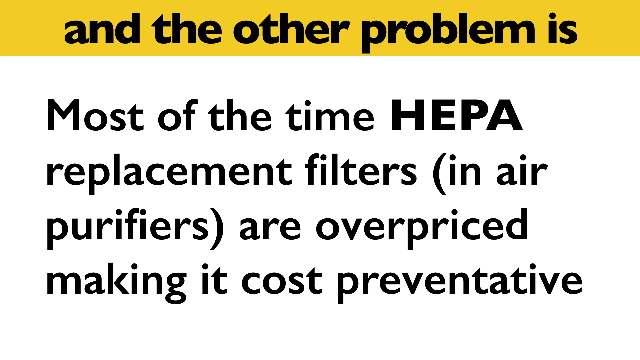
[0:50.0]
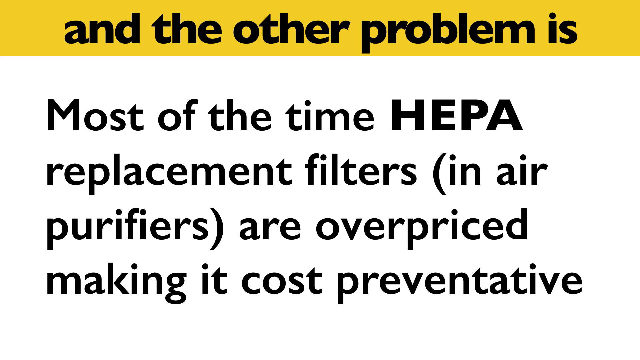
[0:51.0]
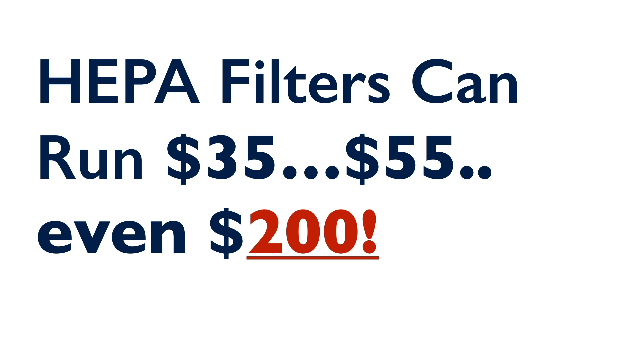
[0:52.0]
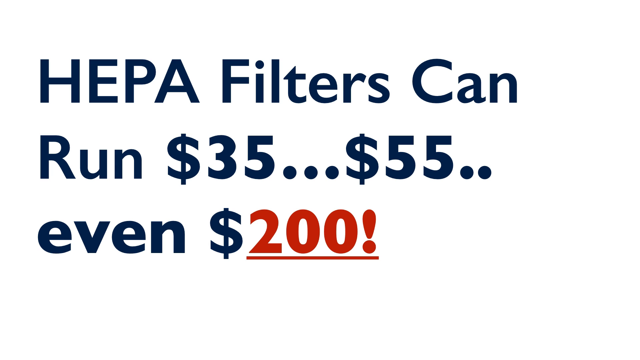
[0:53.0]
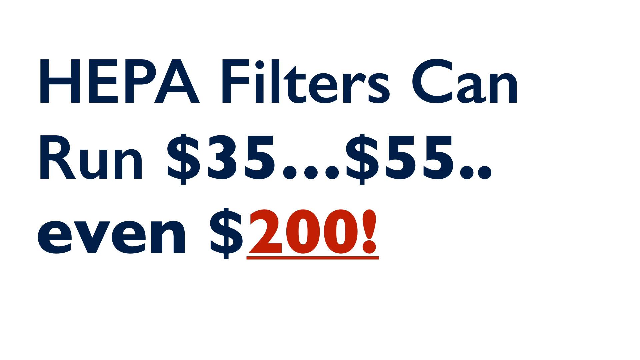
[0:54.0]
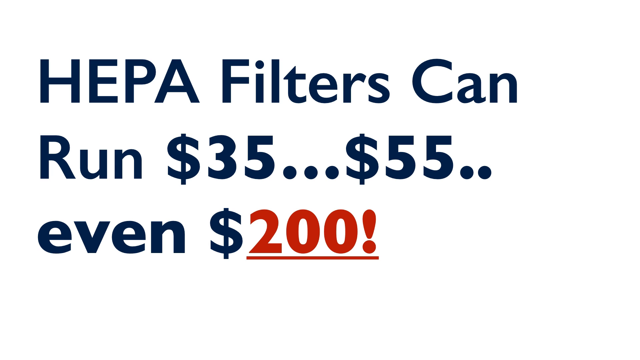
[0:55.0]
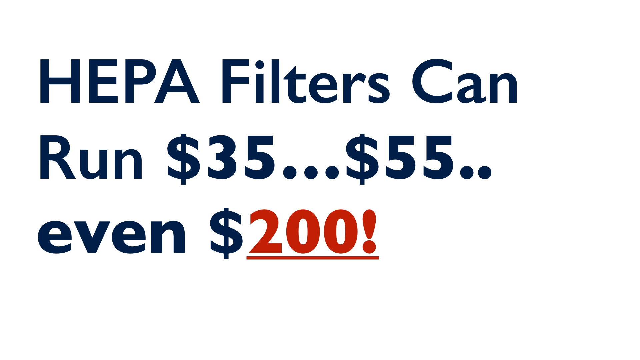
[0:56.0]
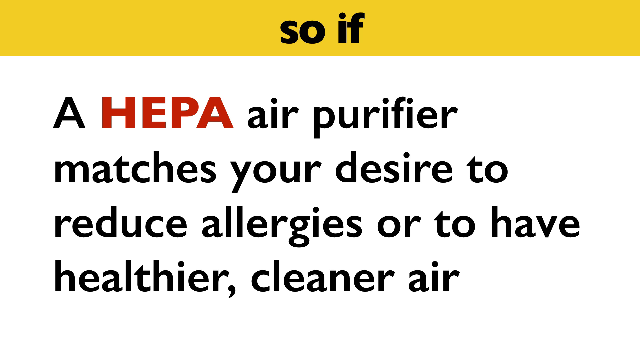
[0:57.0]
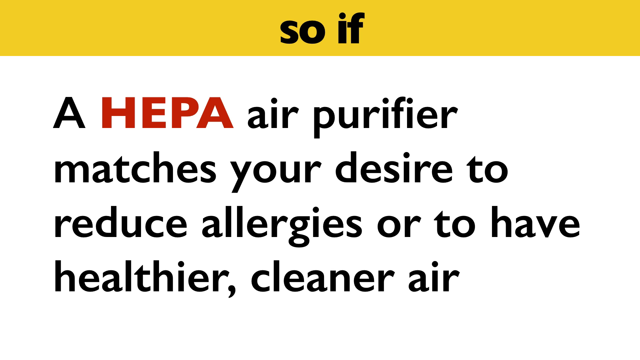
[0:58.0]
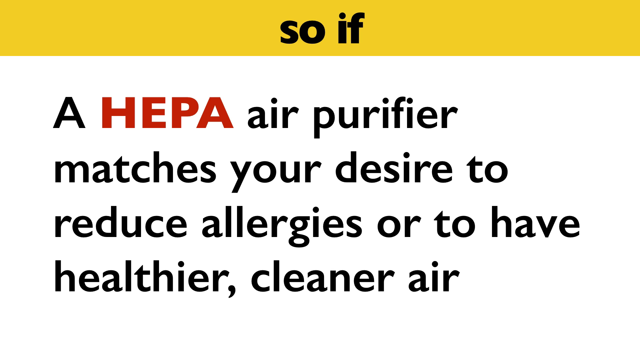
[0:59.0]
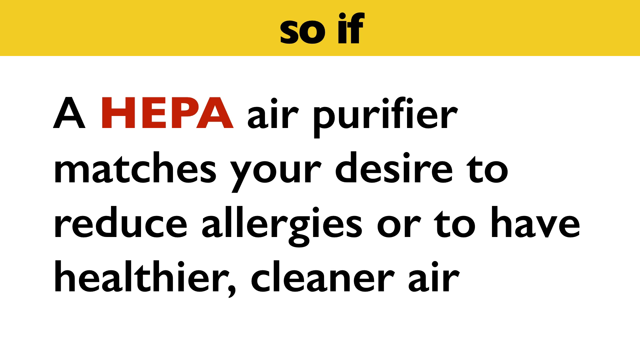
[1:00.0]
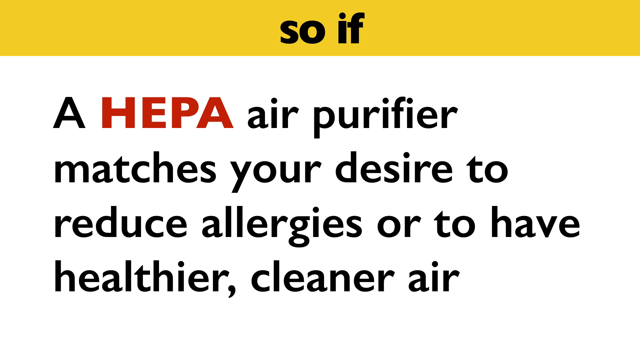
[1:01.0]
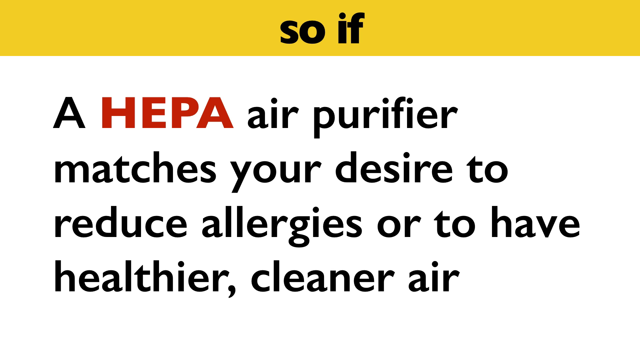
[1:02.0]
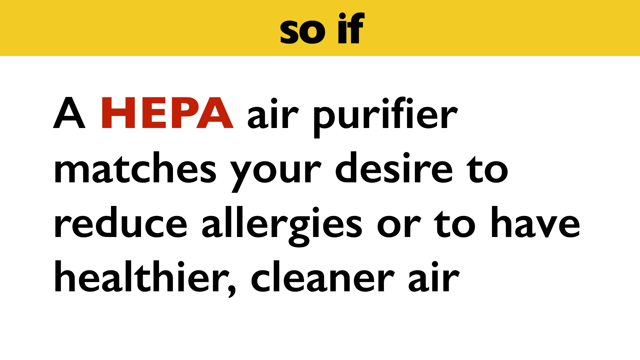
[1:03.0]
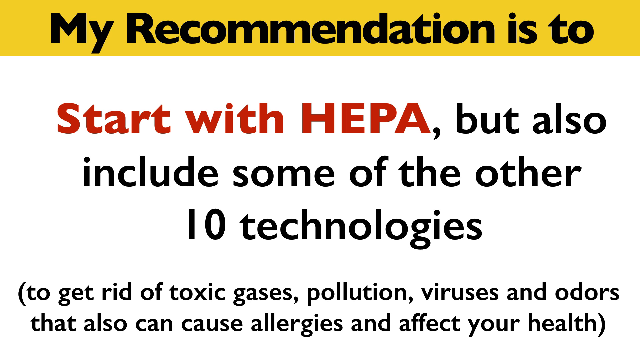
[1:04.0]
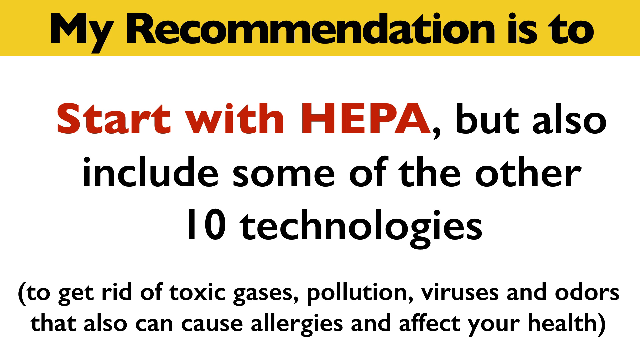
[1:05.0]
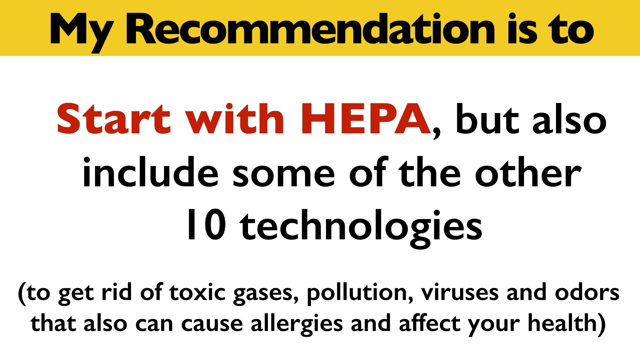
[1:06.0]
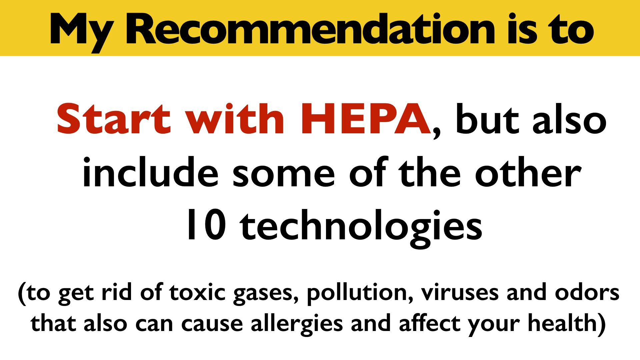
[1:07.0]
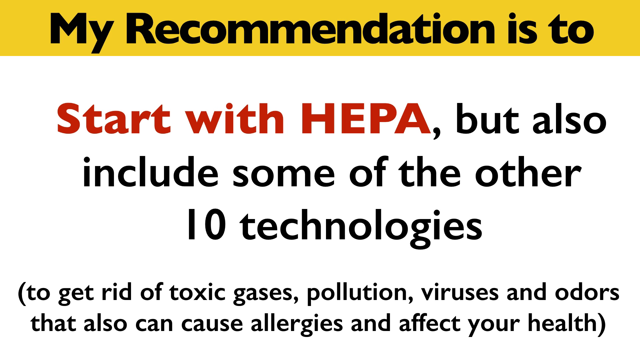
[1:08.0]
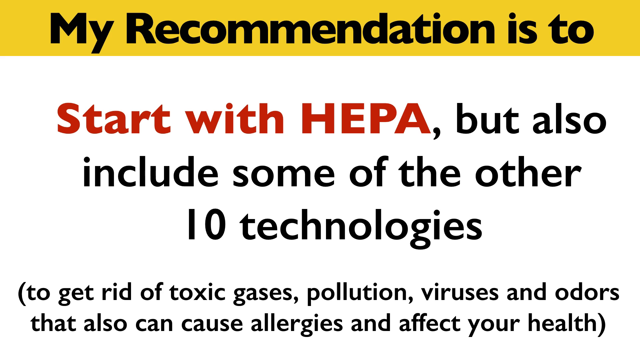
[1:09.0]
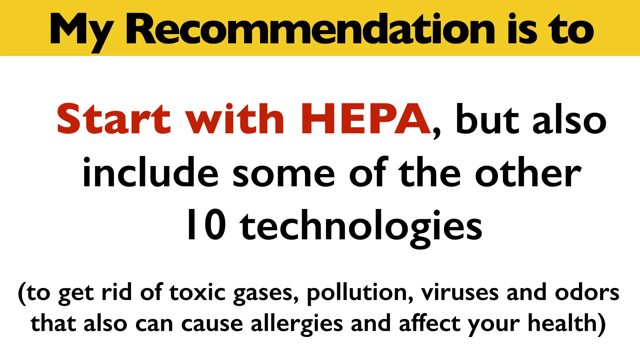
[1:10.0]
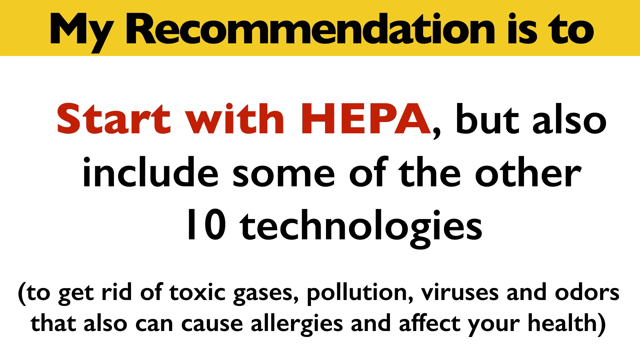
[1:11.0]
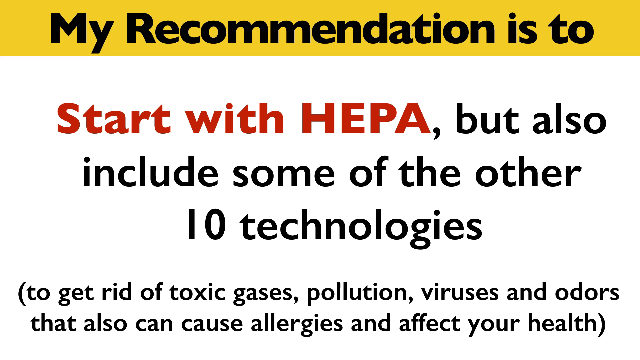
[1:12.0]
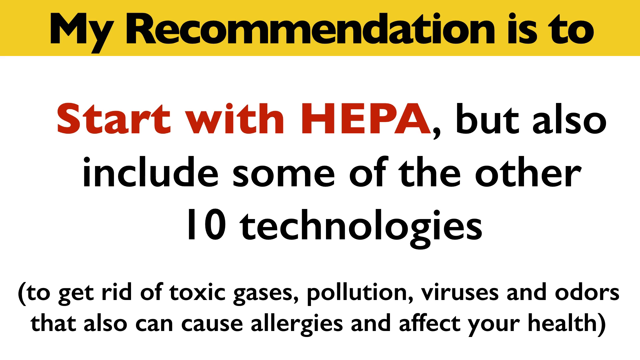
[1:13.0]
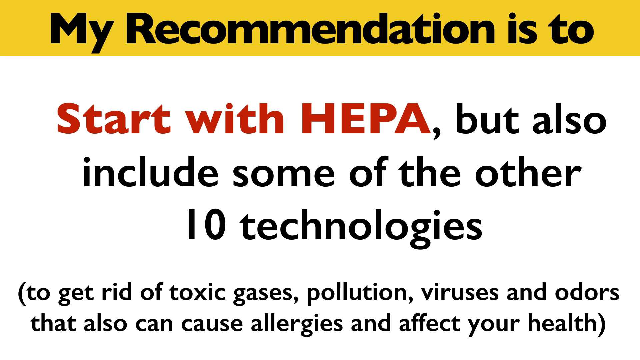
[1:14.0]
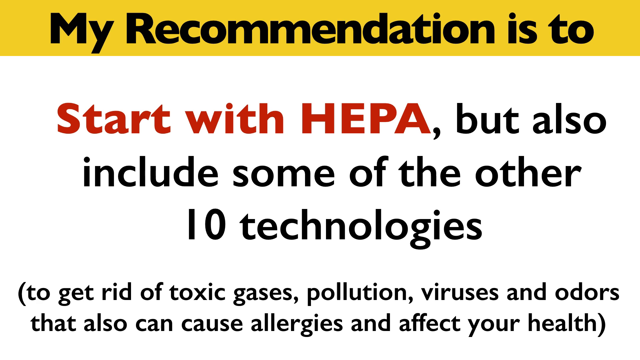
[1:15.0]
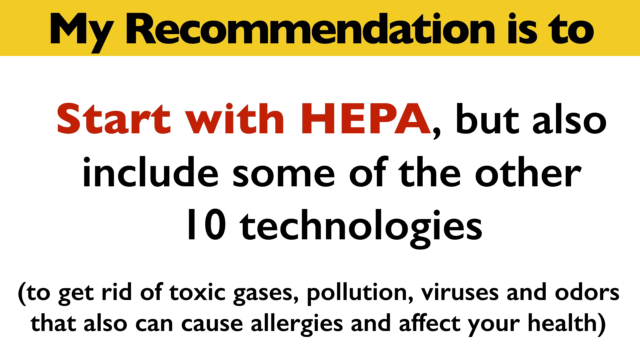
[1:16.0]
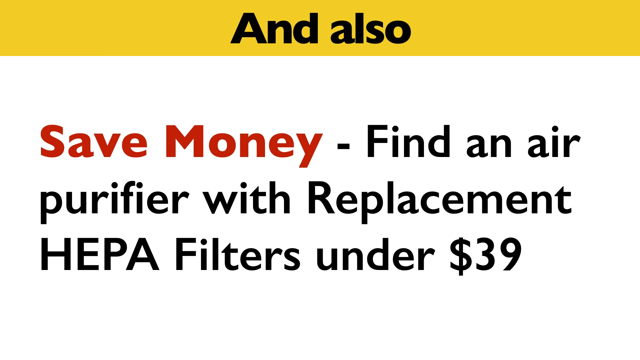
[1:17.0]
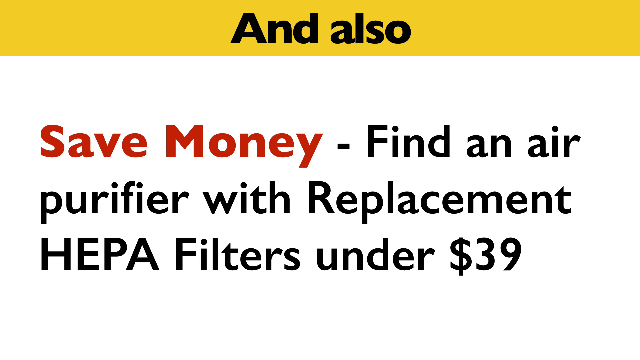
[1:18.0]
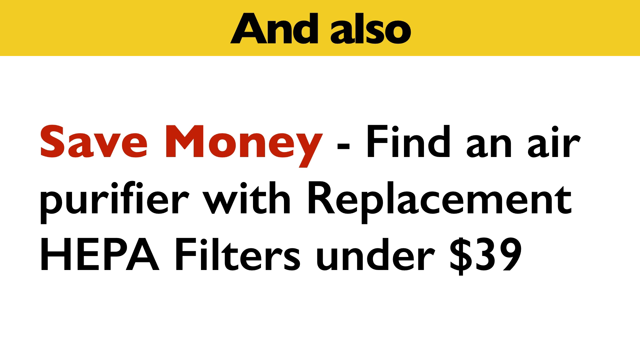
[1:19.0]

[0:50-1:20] The slide has a yellow box across the entire width, taking up about 5% of the top, reading "and the other problem is", with the text "Most of the time HEPA replacement filters in air purifiers are overpriced, making it cost preventative" below it in sentence case and normal text. It stays on screen for a couple of seconds, then the yellow bar disappears and a plain white slide reads "HEPA filters can run" followed in bold by "$35... $55... even $200!", with "$200" underlined in red and an exclamation point at the end; it is in title case apart from the word "even", which is bold. A slide looking like the previous ones follows, with "so if" in bold in the yellow and then "a HEPA air purifier matches your desire to reduce allergies or to have a healthier cleaner air", with "HEPA" in bold and red. A slide then has "my recommendation is" on the yellow, "start with HEPA" in red and bold, and "but also include some of the other technologies" in standard text that is larger than the smaller, standard-font text in brackets at the bottom, "to get rid of toxic gases, pollution, viruses and odors that can also cause allergies and affect your health". It stays on screen for approximately 10 seconds and is replaced by a slide of similar design, also with the yellow box, showing "save money" in bold red, then normal black text reading "- find an air purifier with replacement HEPA filters under $39", in sentence case apart from "Replacement HEPA Filters", whose words start with capital letters, with "HEPA" all in uppercase.